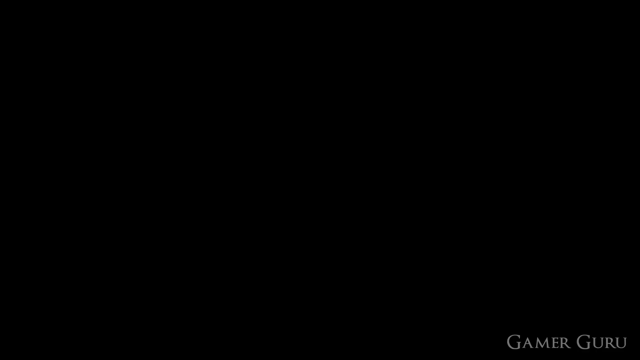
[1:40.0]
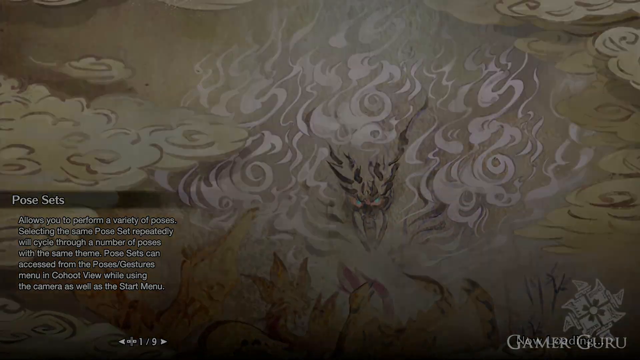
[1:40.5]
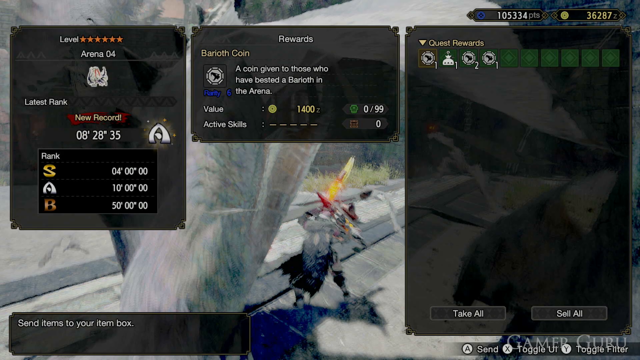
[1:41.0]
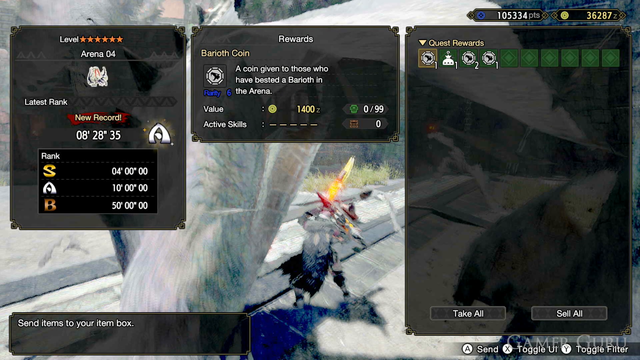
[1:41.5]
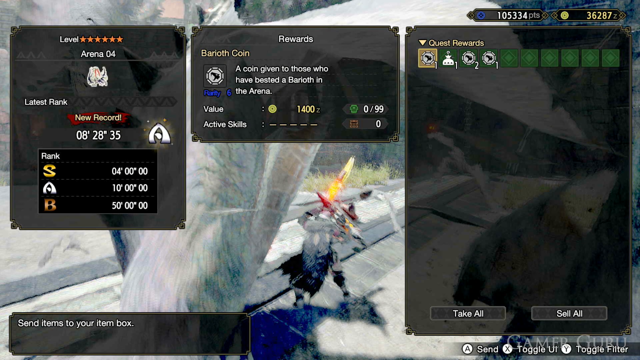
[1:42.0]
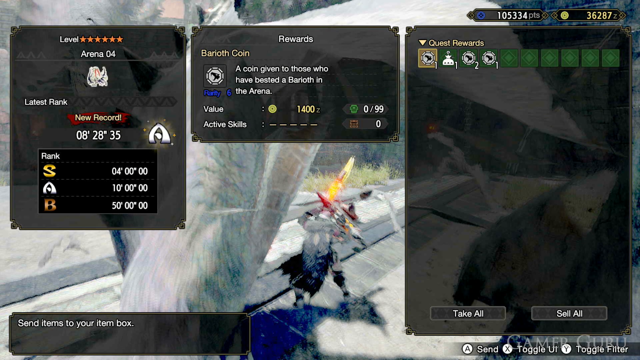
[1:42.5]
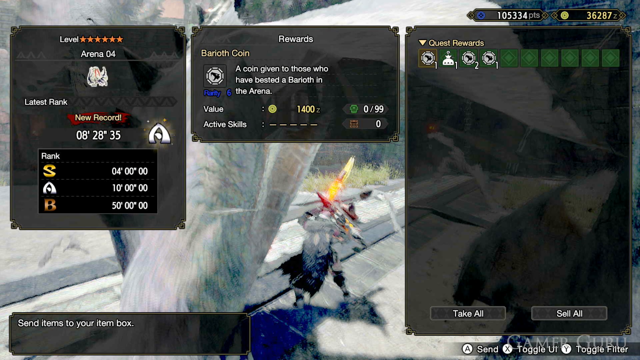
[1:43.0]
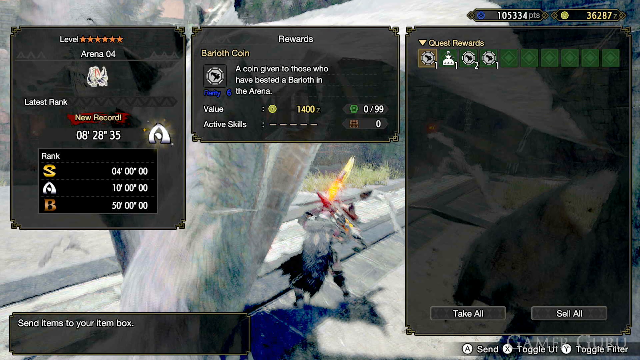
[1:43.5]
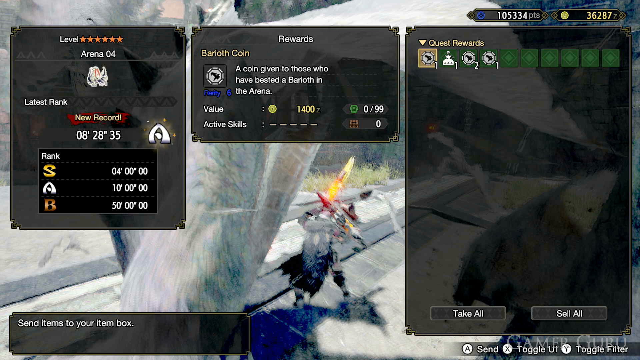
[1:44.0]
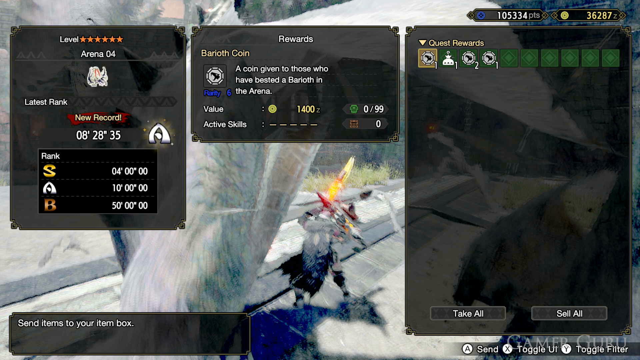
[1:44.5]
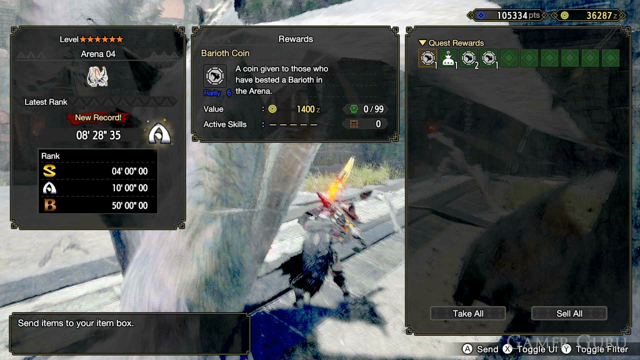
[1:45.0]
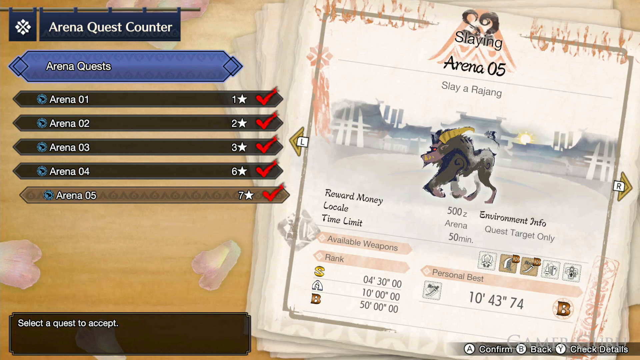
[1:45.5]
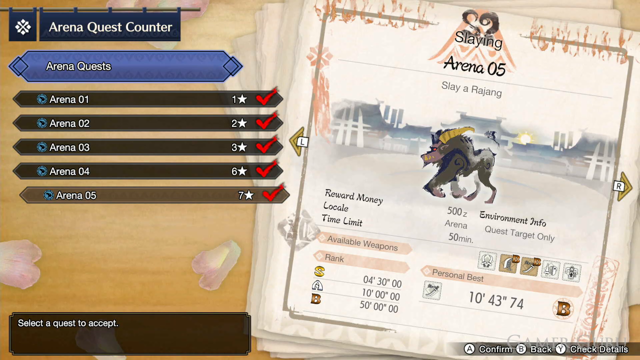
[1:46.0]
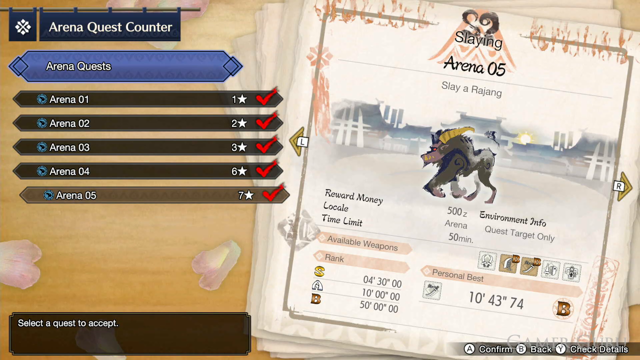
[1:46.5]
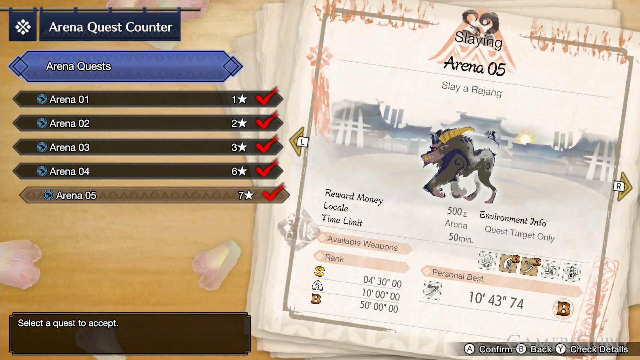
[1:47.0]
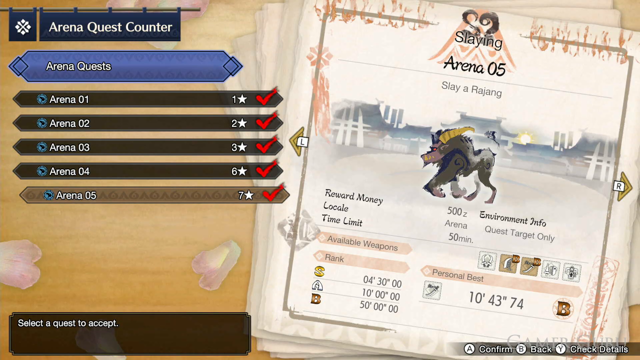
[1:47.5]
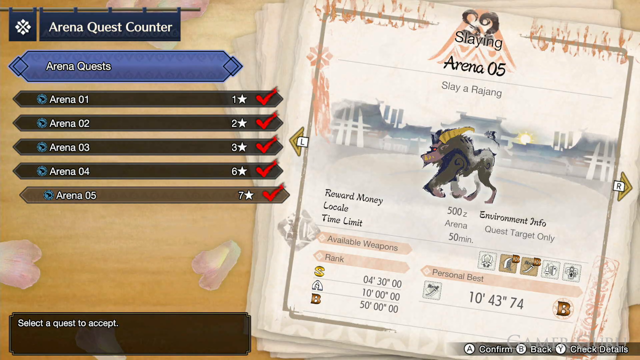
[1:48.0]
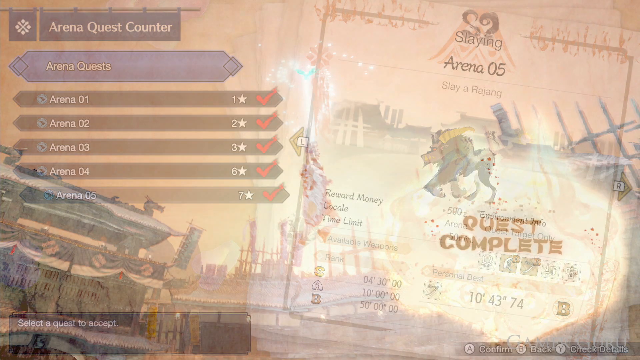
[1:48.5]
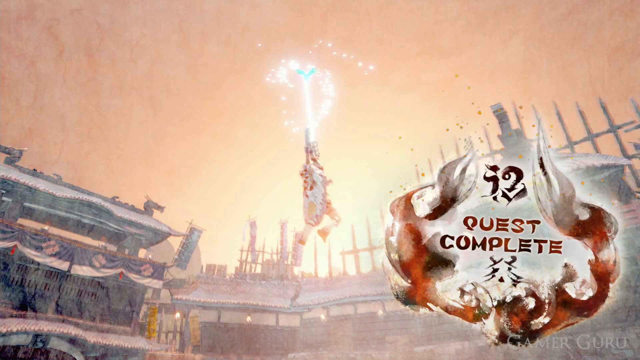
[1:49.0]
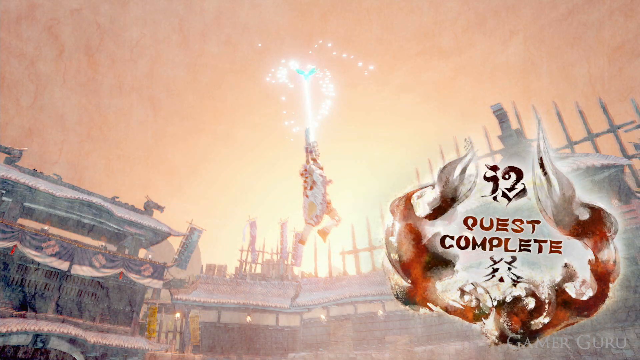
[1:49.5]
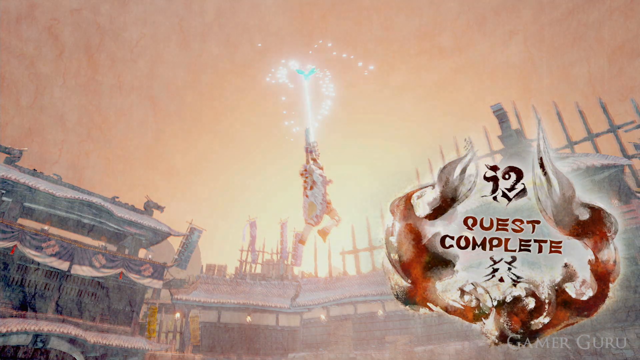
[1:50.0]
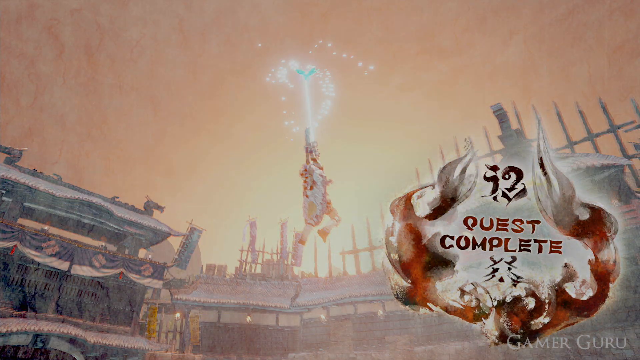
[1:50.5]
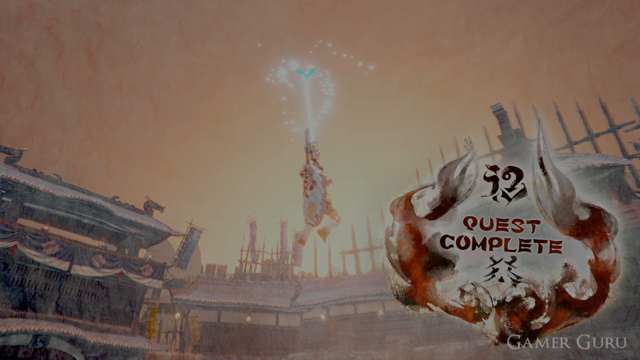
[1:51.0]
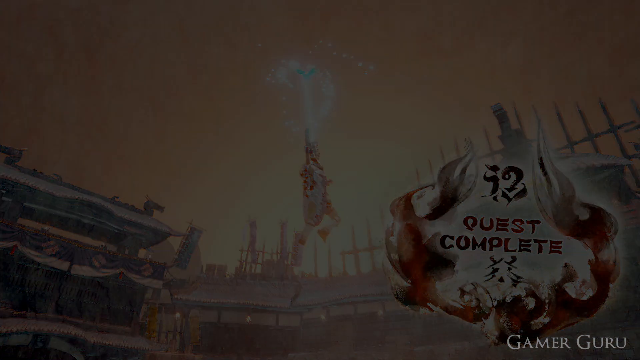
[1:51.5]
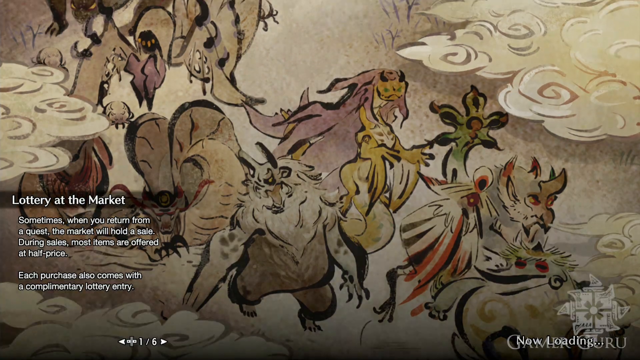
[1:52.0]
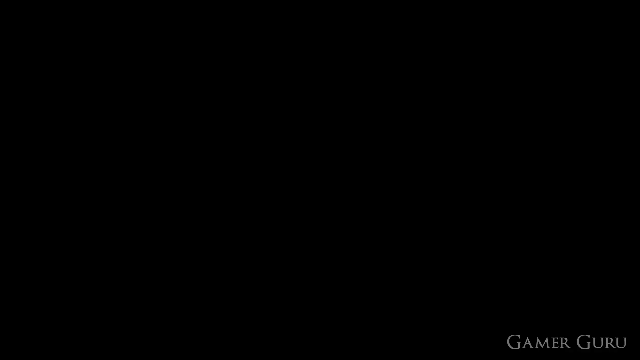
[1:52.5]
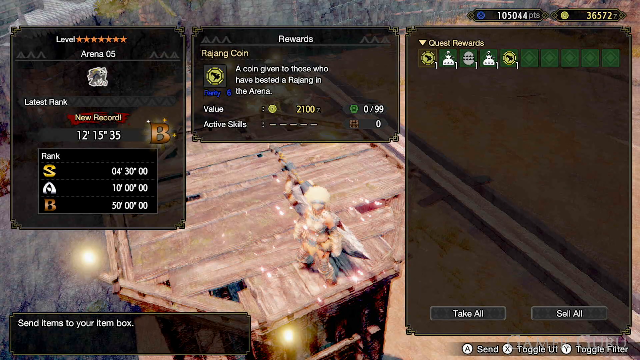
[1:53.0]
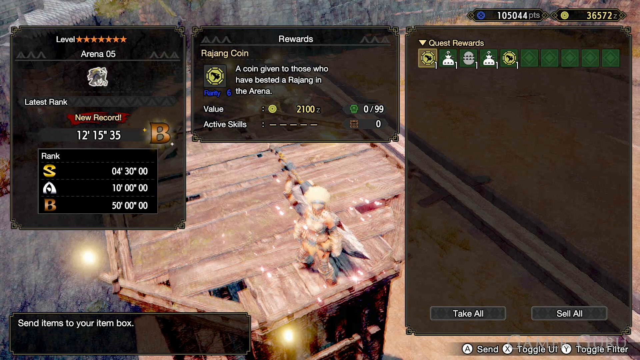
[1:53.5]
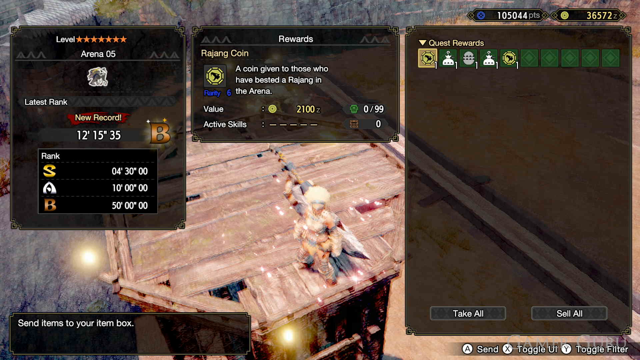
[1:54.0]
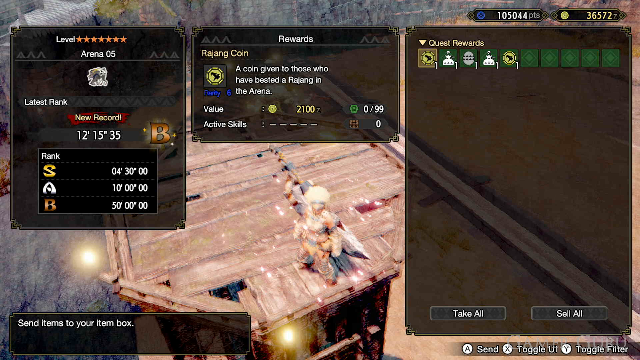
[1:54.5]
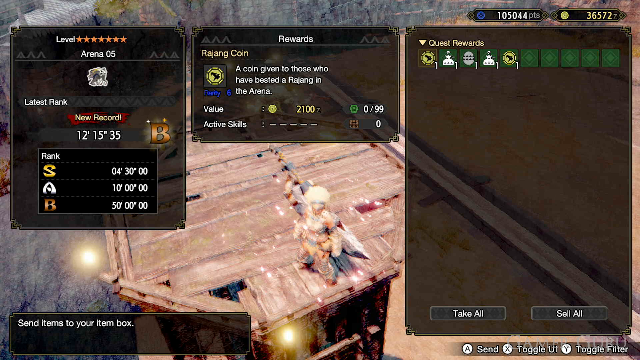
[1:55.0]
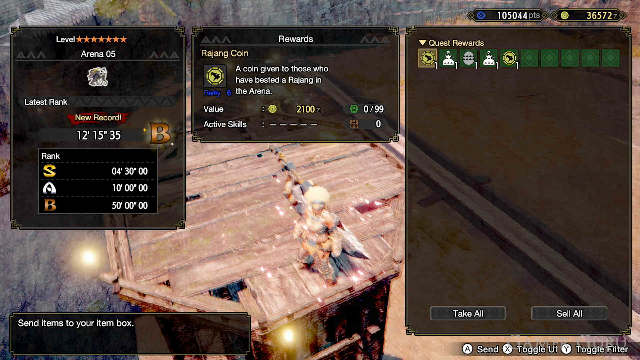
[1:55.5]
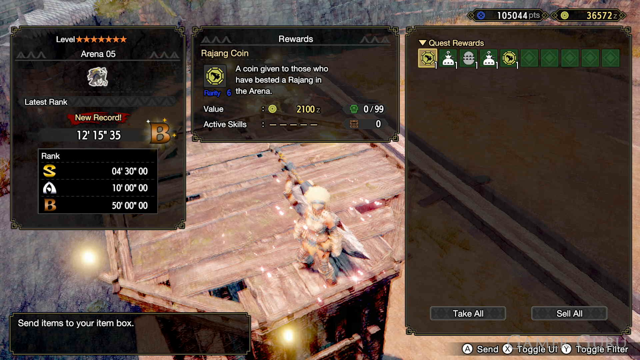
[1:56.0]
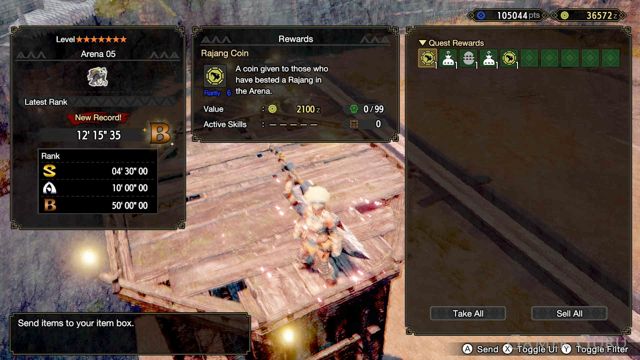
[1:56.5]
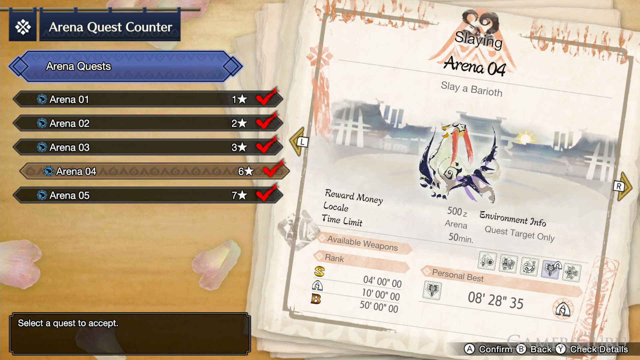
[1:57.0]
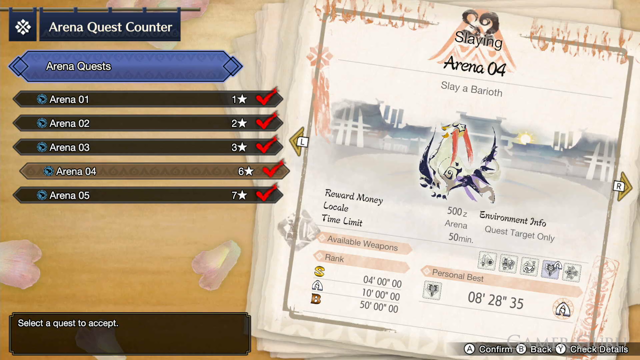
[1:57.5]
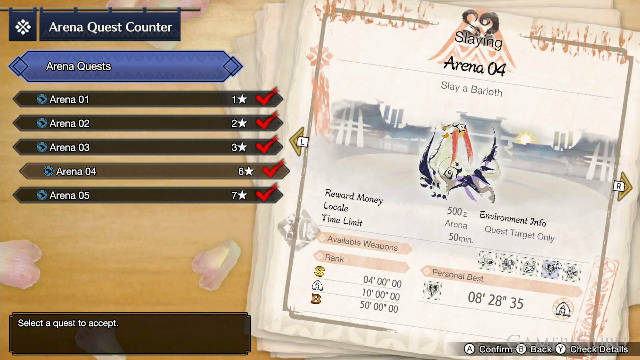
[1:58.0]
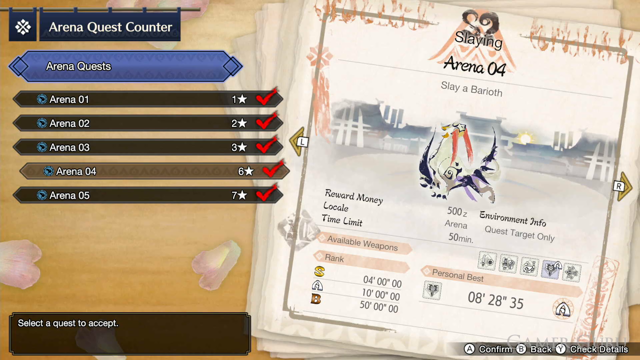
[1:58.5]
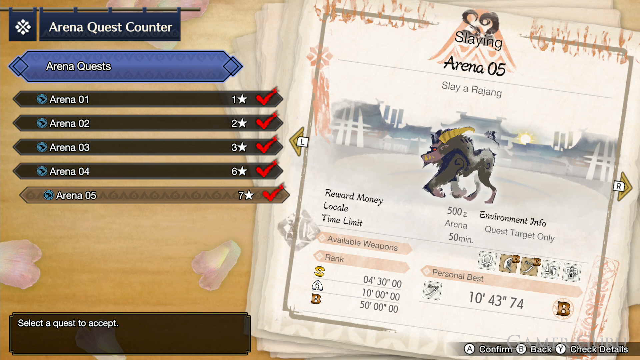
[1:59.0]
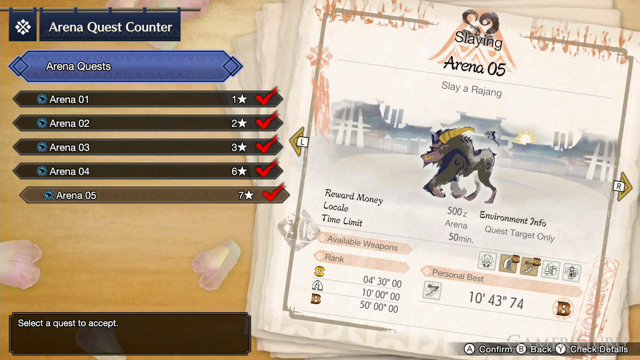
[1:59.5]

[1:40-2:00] A video game screen shows the character has 105,334 points and 36,287 Z, the game currency. On the left it reads level six stars, arena 04, latest rank "new record" 08-28-35, rank S 40000, rank A 100000 and B 500000. In the middle is a Barroth coin, "a coin given to those who have bested a Barroth in the arena," valued at 1,400 Z. Quest rewards are shown on the right. The view switches to a screen with "arena quest counter" in white letters on a blue banner at the top left, and arena quests listed: Arena 1 1 star, Arena 2 2 stars, Arena 3 3 stars, Arena 4 6 stars, Arena 5 7 stars.